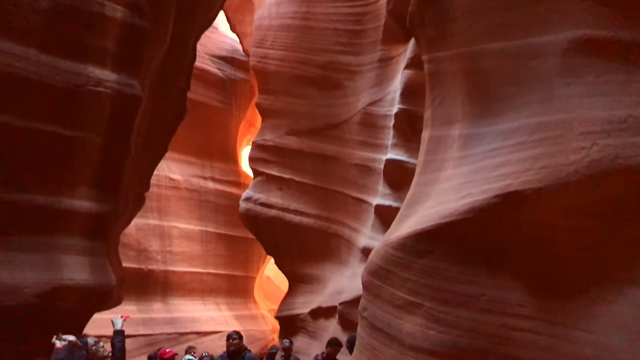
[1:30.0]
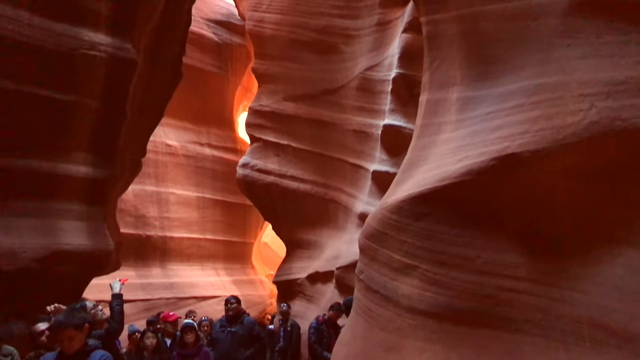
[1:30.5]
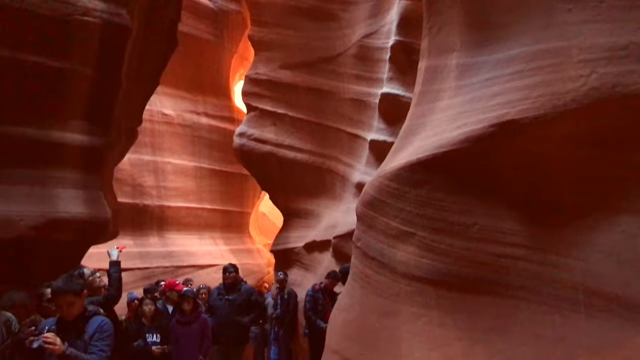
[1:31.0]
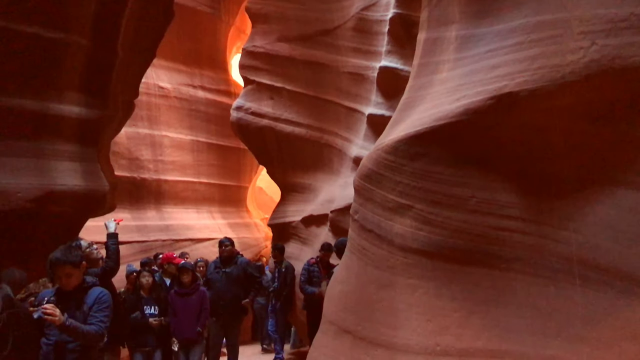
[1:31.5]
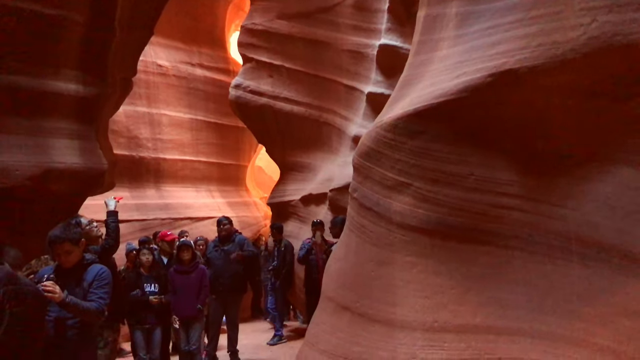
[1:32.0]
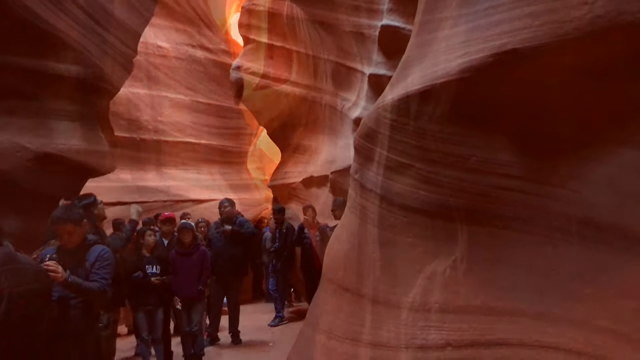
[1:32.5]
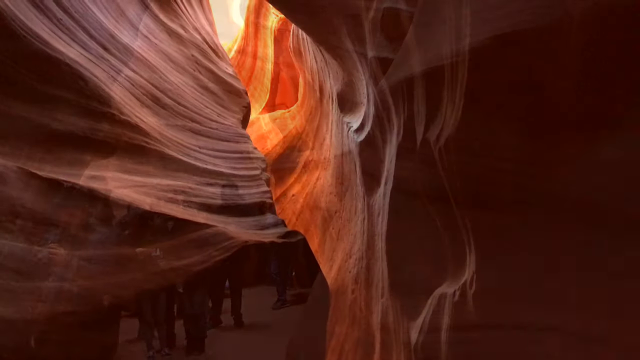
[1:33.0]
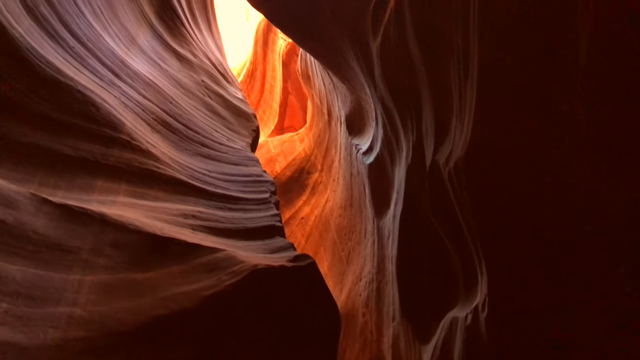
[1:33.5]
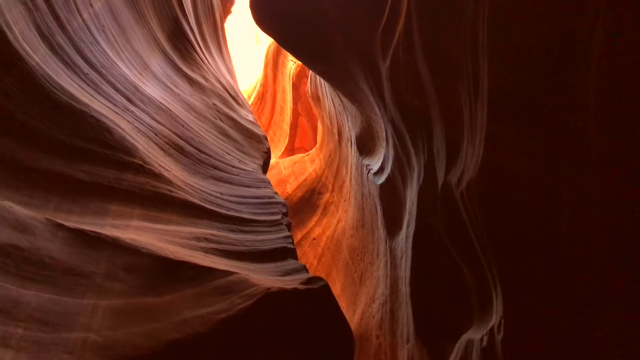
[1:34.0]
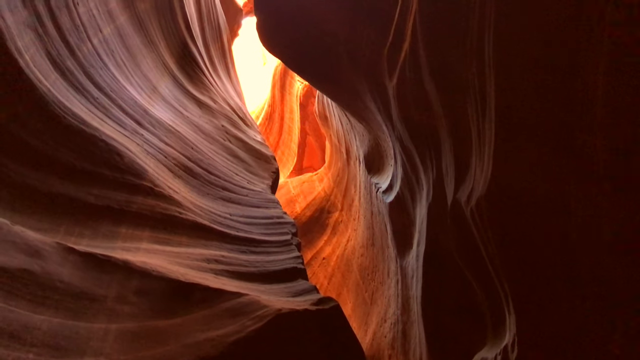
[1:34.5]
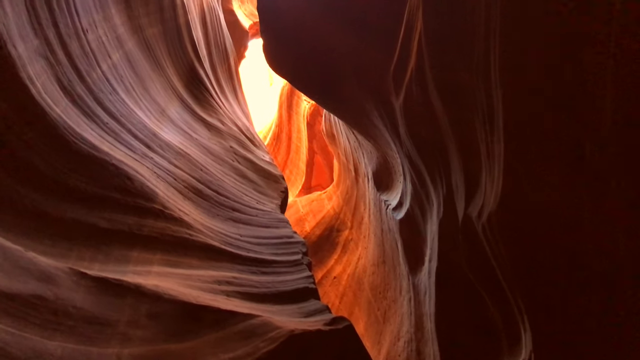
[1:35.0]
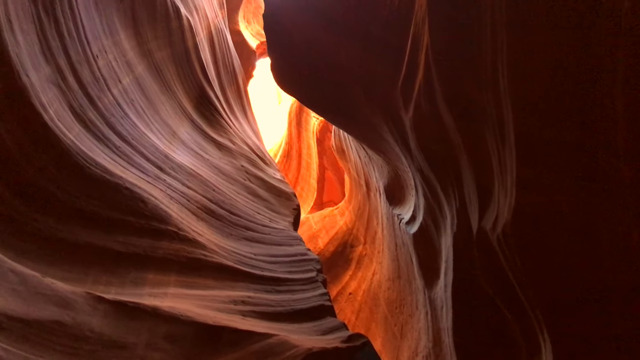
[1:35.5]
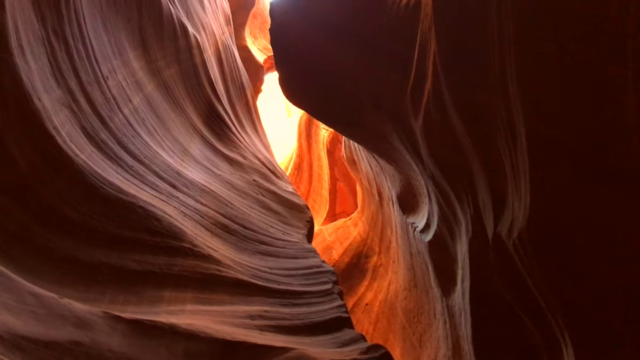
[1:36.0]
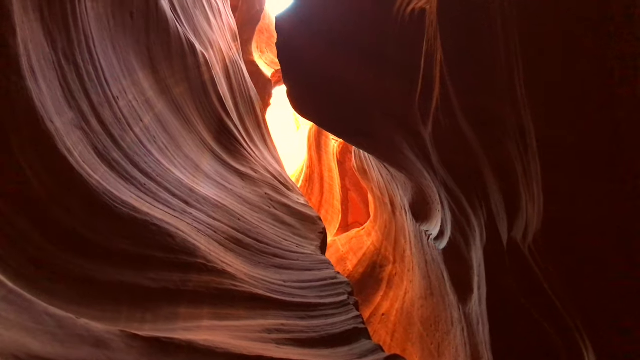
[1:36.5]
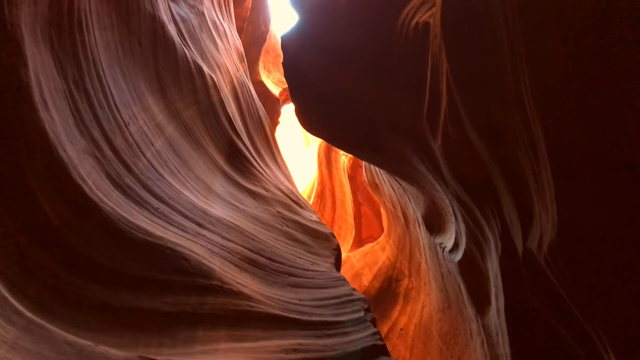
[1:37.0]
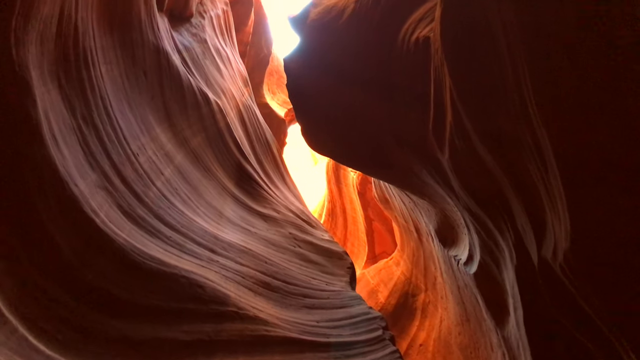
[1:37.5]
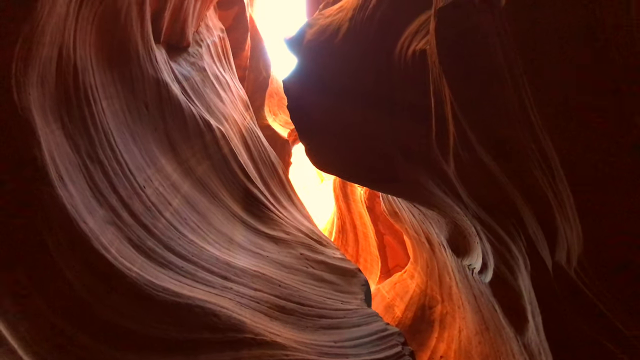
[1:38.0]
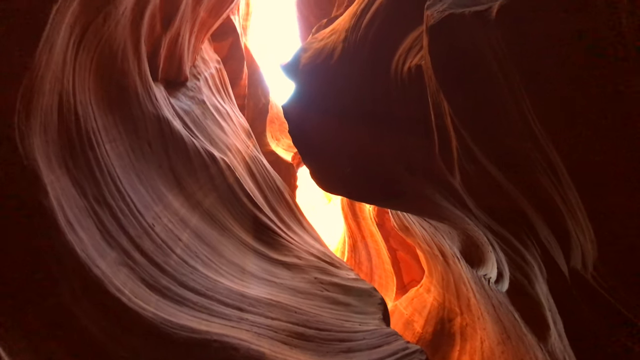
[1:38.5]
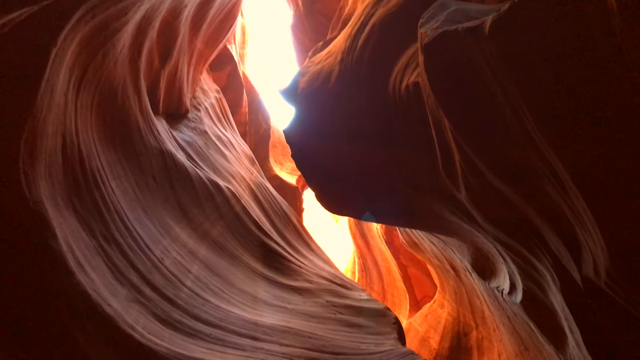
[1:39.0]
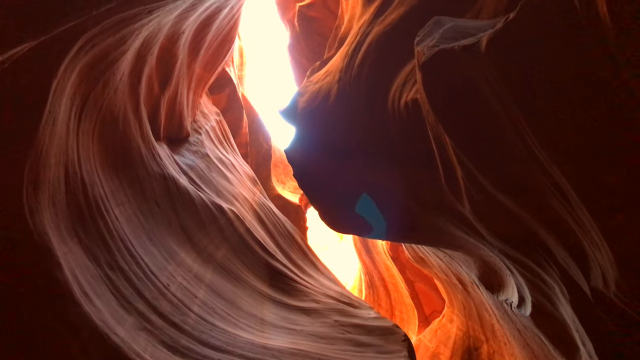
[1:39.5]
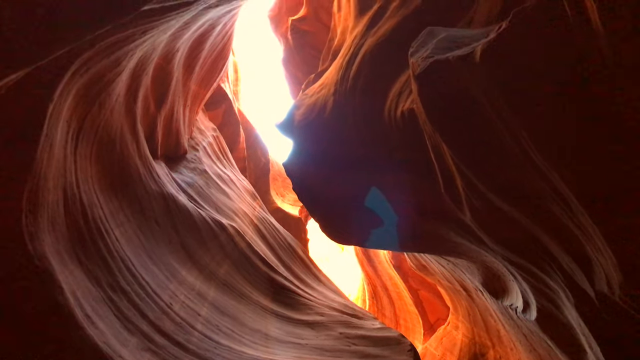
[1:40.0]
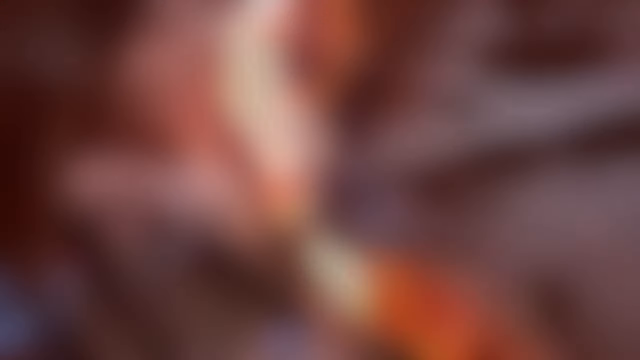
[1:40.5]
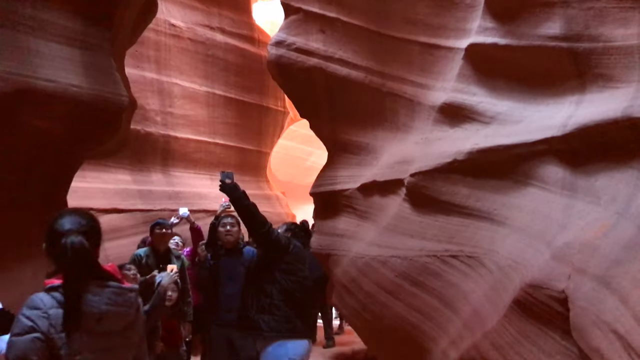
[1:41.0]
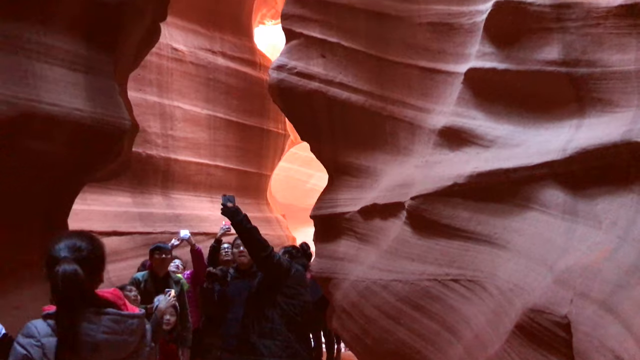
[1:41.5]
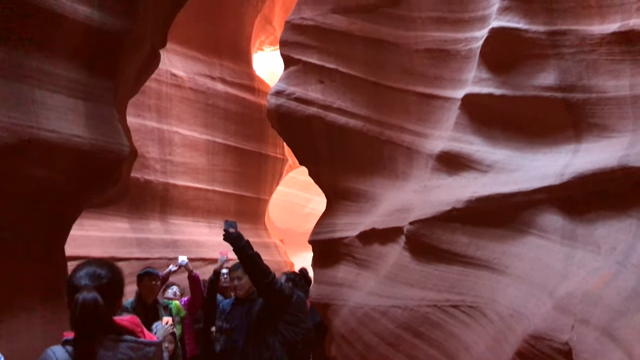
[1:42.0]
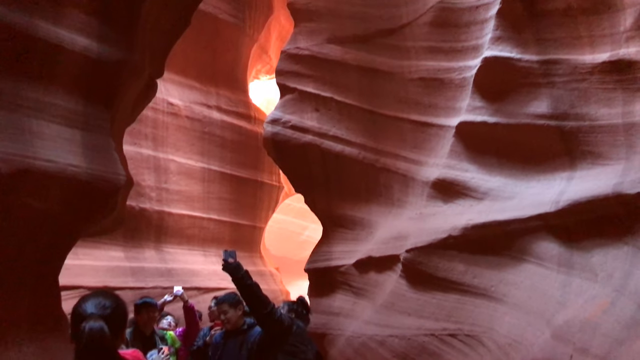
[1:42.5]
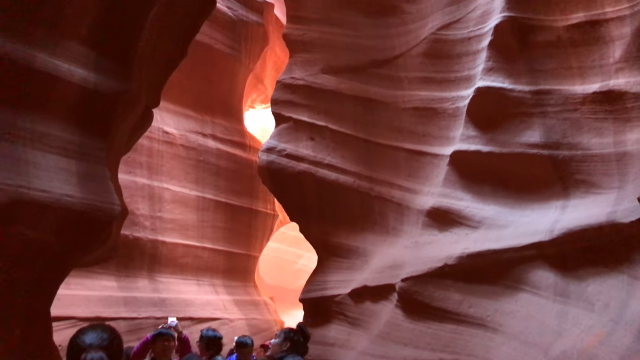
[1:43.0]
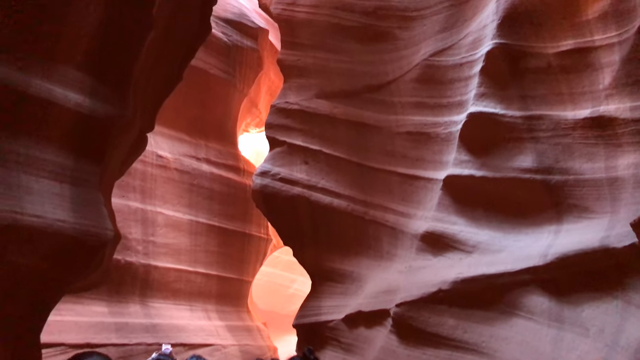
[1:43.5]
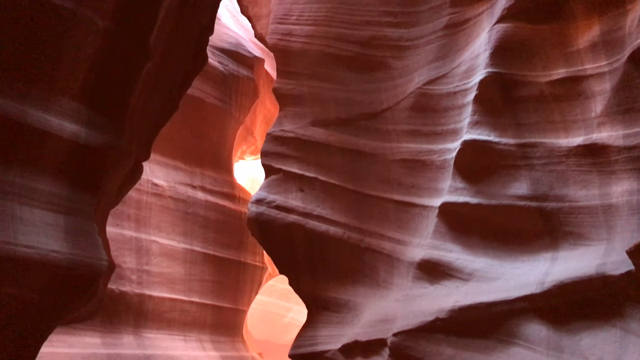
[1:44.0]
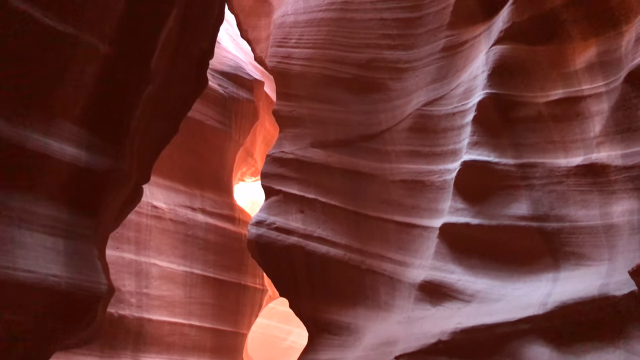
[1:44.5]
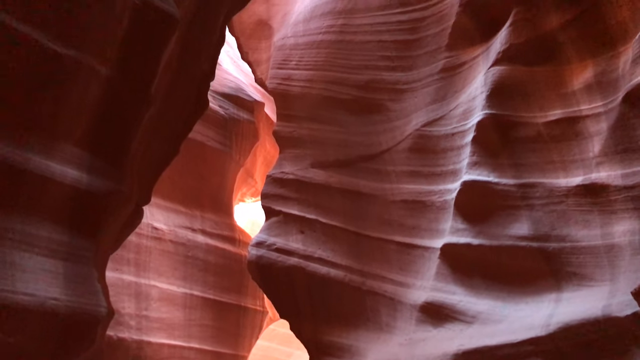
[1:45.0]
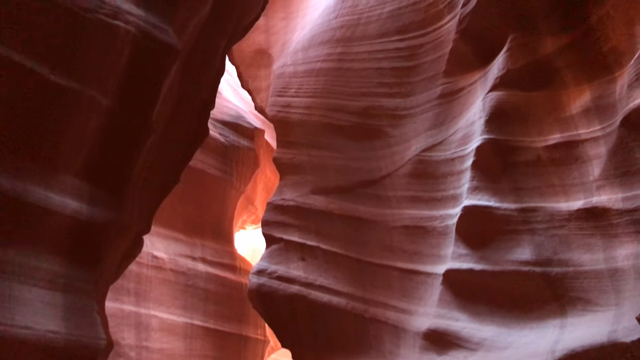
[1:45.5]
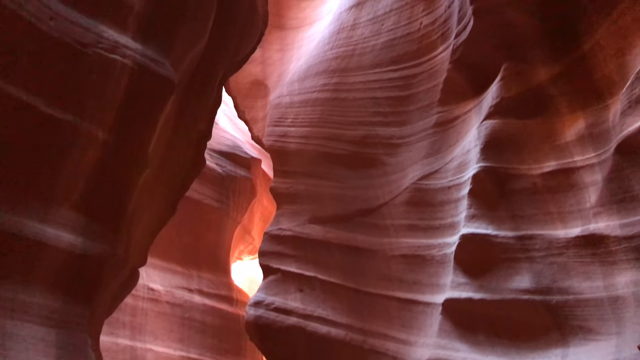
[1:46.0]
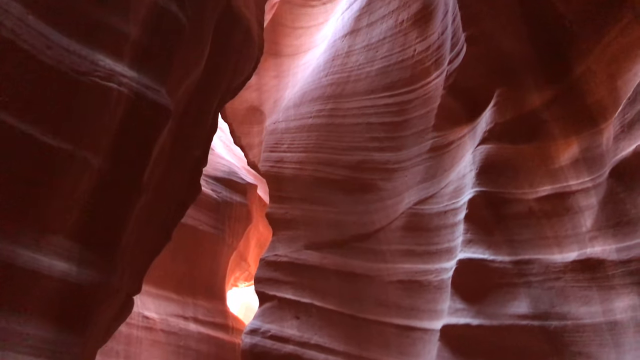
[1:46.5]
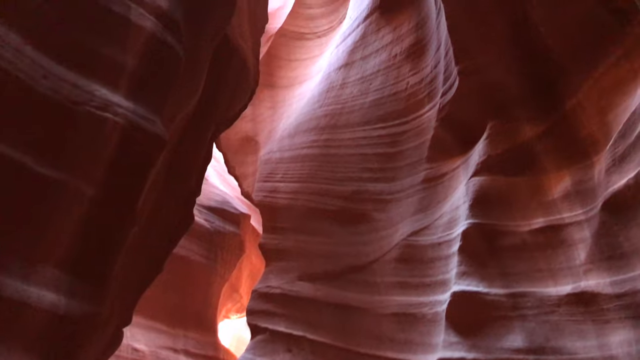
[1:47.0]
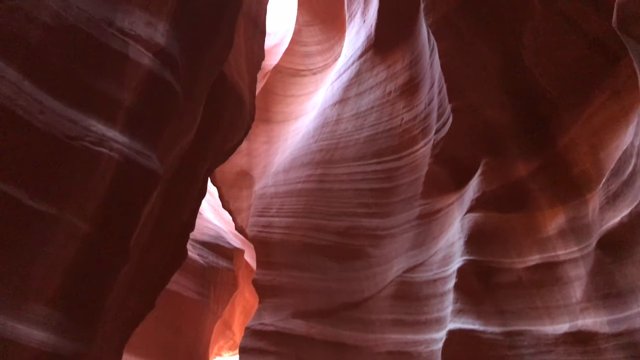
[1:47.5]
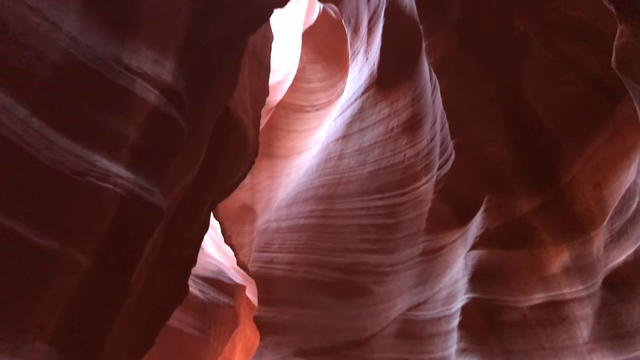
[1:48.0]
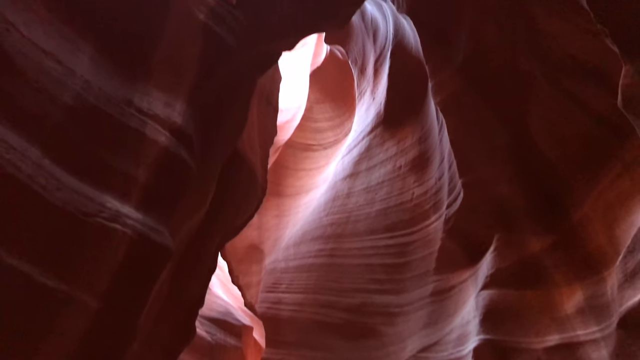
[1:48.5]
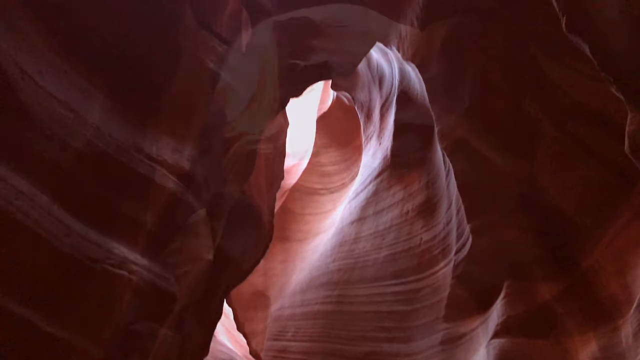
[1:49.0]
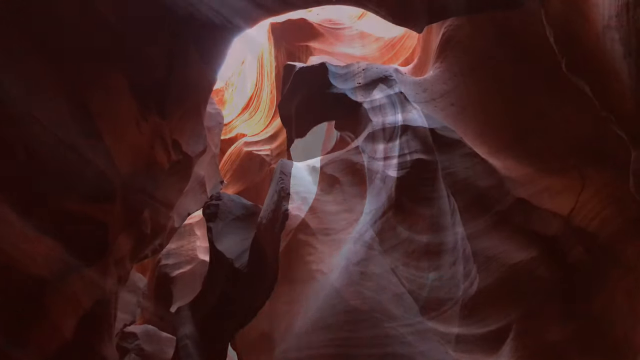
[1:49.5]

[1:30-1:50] A scene inside Antelope Canyon shows gigantic walls, with spaces between them forming brown pillars. The pillars look like they have undergone a thousand years of formation, erosion and abrasion, shaped into smooth curves. The camera shifts its focus from above the walls down to the ground, where a group of about 200 people is viewing the canyon. They are of different races, including black people, Americans, Chinese and Indians, and wear many different colors, with no single color standing out. One person gazes at the roof of the walls. As the focus shifts to the roof, a crevice shows the bright outside, and the sun is visible through the crevices.